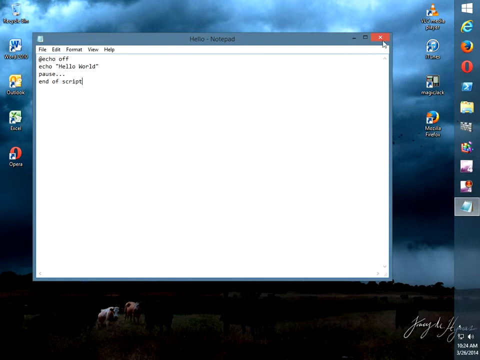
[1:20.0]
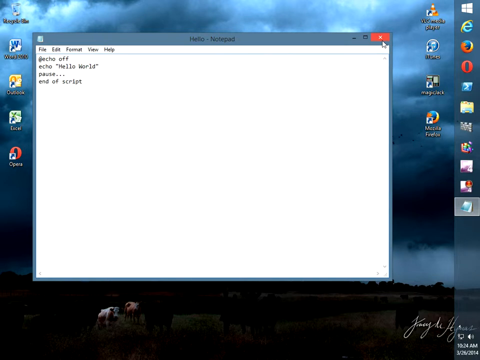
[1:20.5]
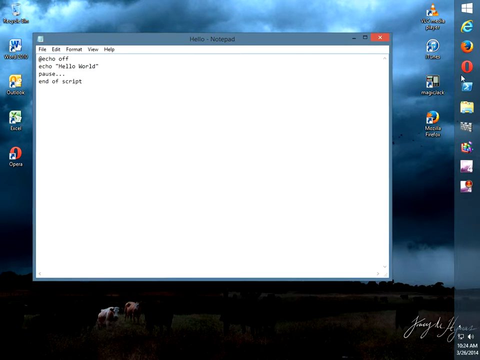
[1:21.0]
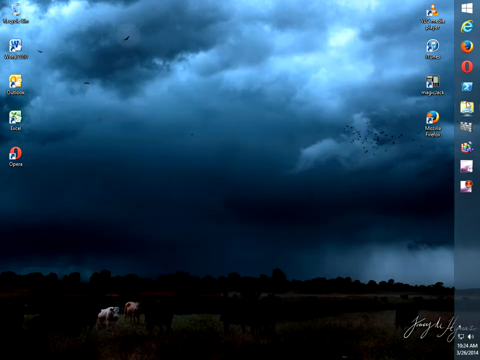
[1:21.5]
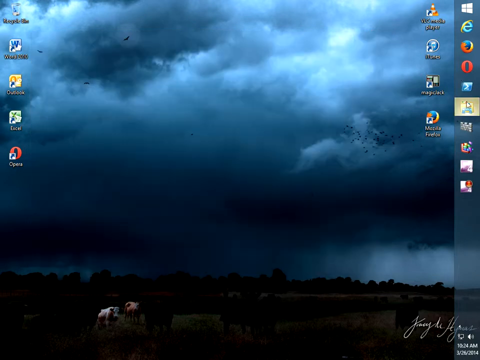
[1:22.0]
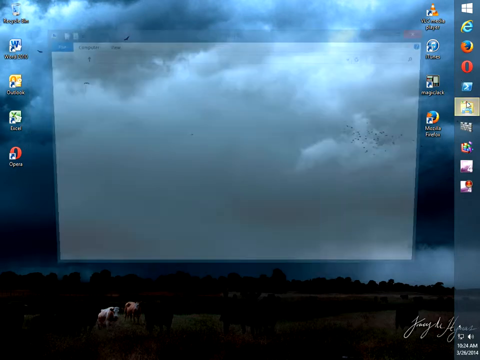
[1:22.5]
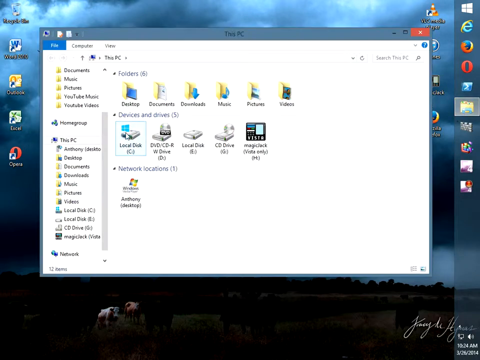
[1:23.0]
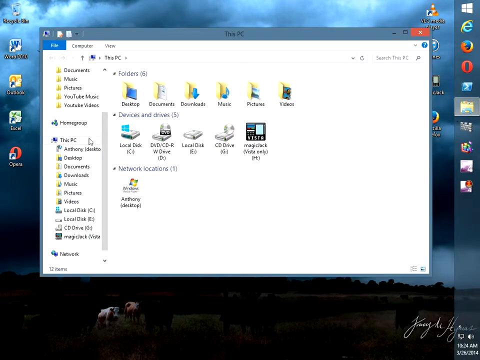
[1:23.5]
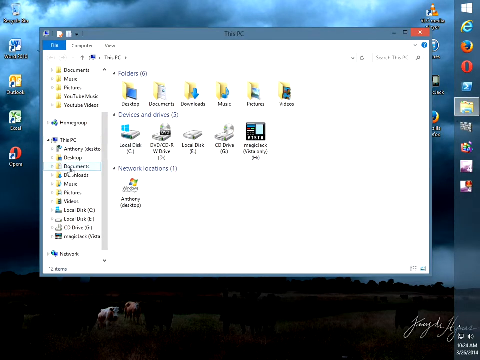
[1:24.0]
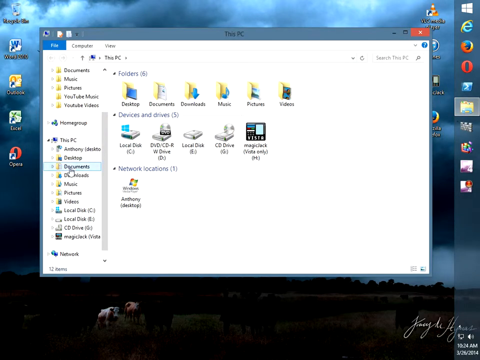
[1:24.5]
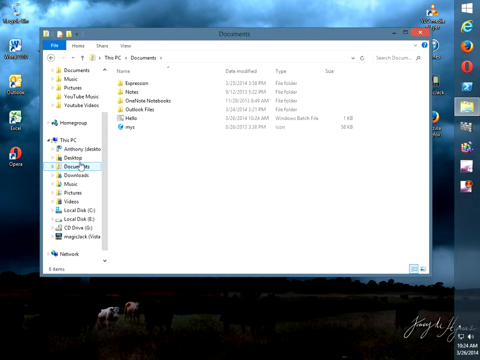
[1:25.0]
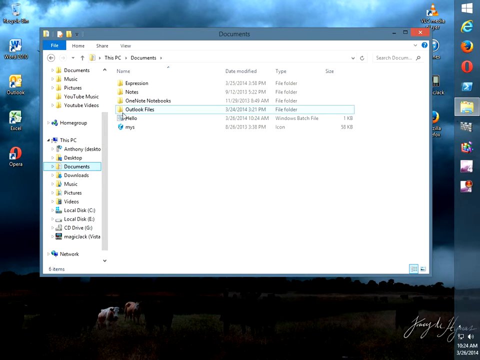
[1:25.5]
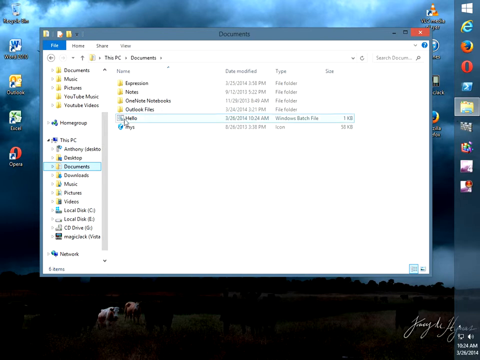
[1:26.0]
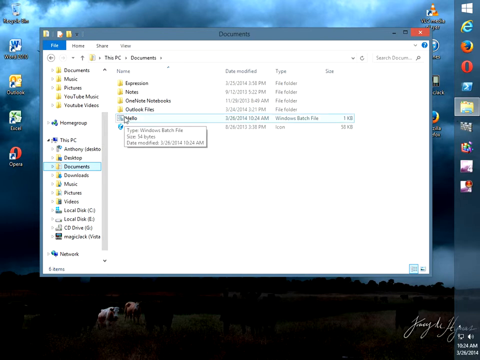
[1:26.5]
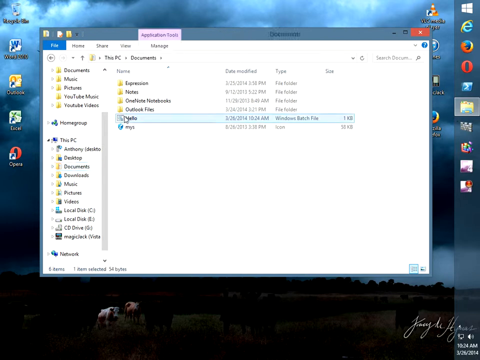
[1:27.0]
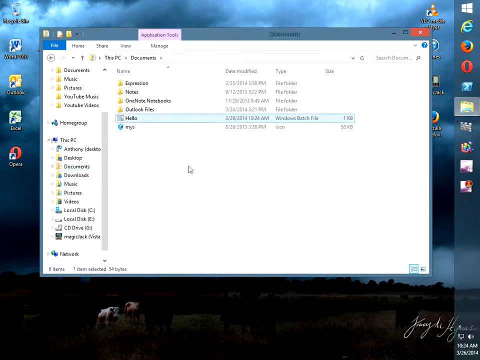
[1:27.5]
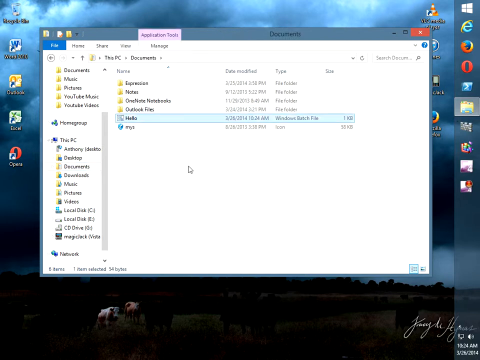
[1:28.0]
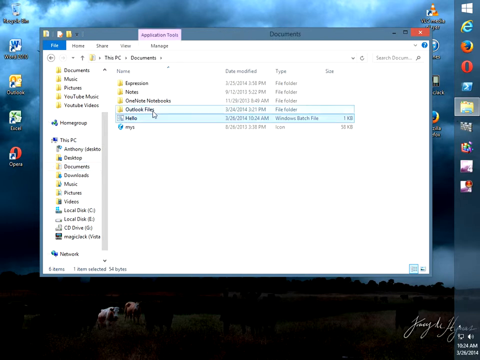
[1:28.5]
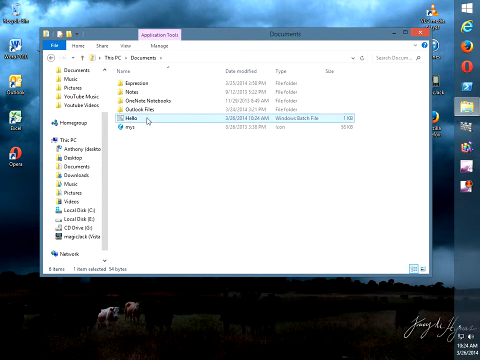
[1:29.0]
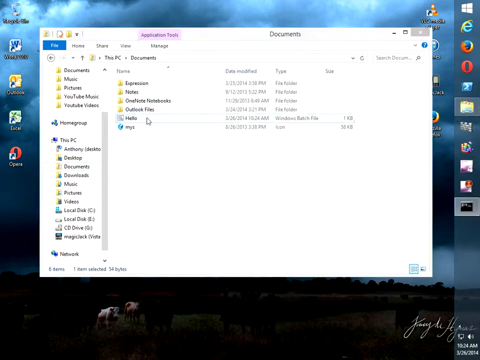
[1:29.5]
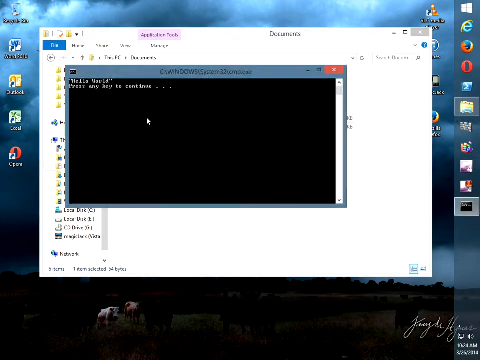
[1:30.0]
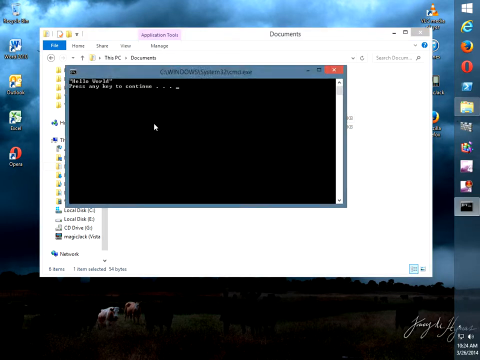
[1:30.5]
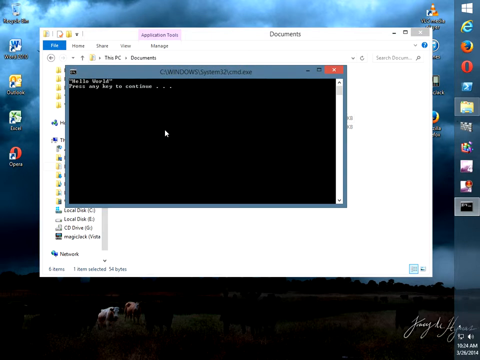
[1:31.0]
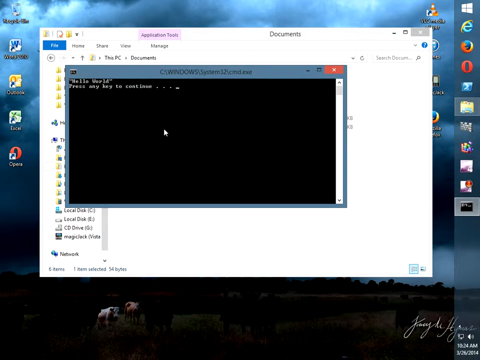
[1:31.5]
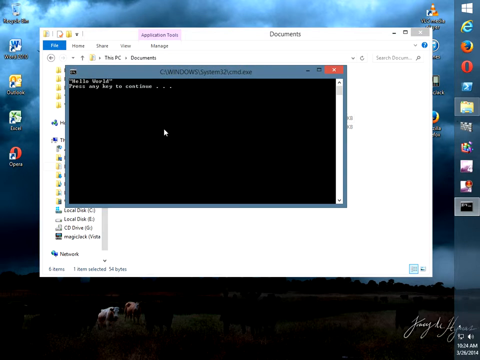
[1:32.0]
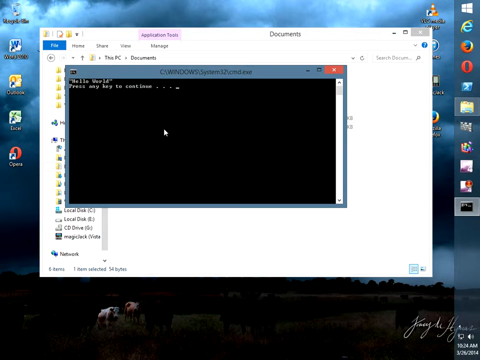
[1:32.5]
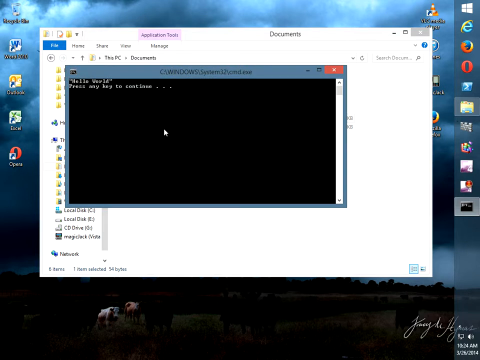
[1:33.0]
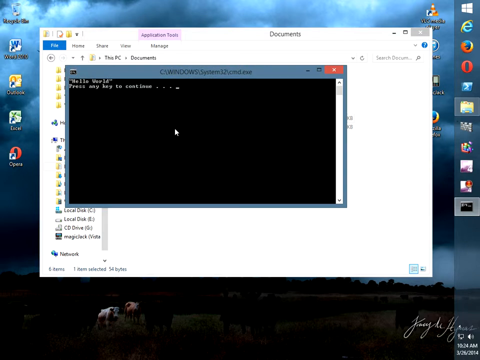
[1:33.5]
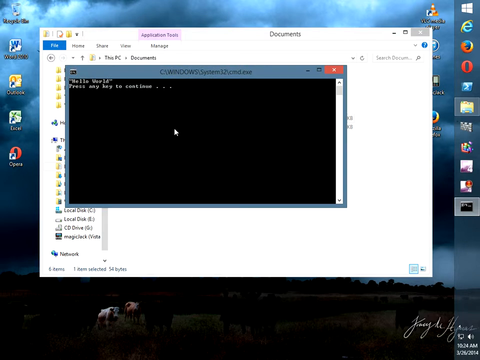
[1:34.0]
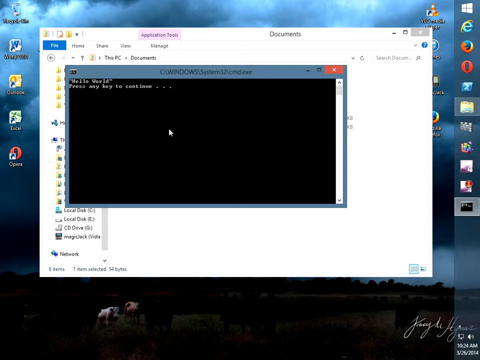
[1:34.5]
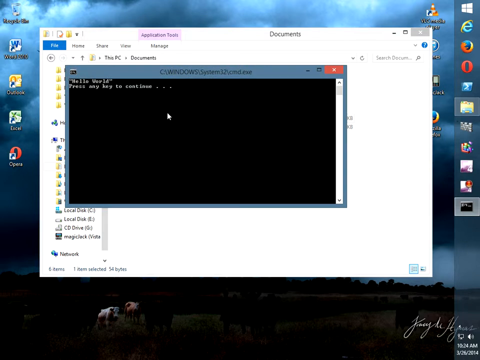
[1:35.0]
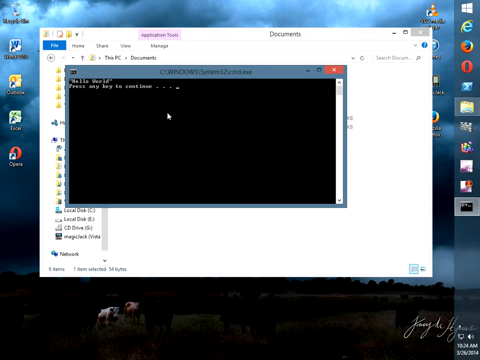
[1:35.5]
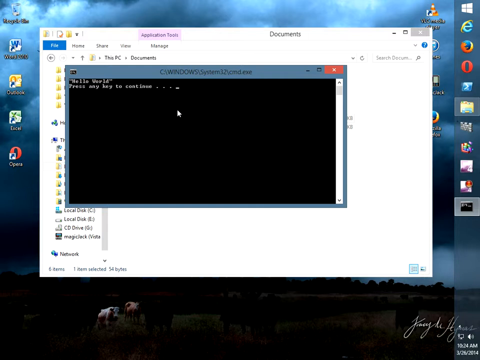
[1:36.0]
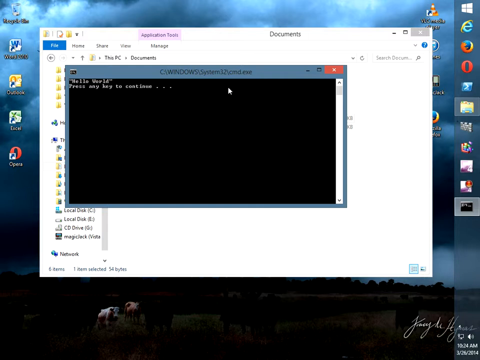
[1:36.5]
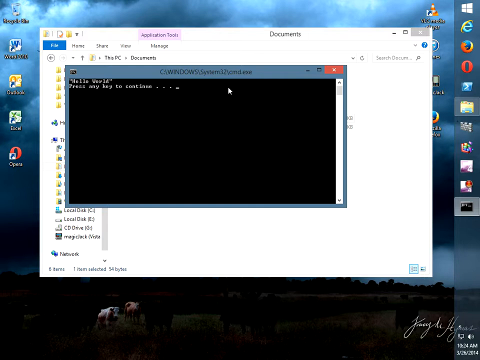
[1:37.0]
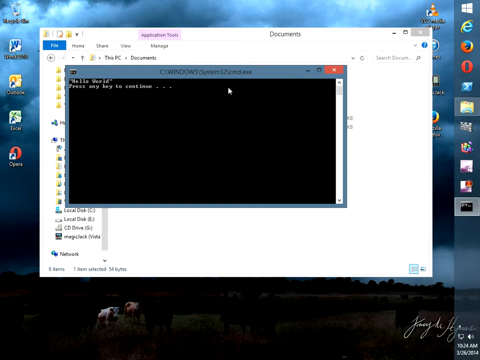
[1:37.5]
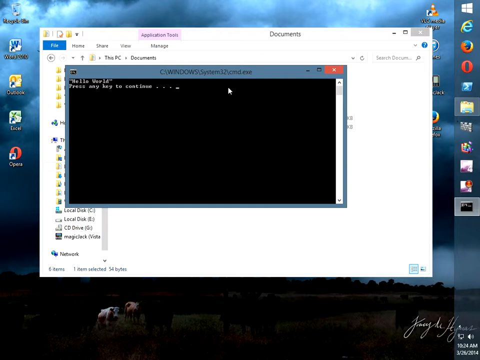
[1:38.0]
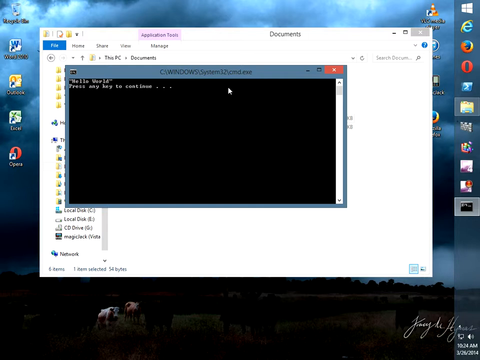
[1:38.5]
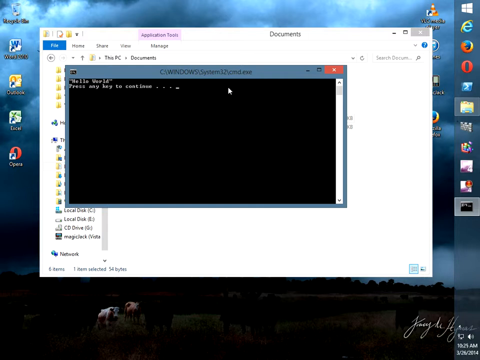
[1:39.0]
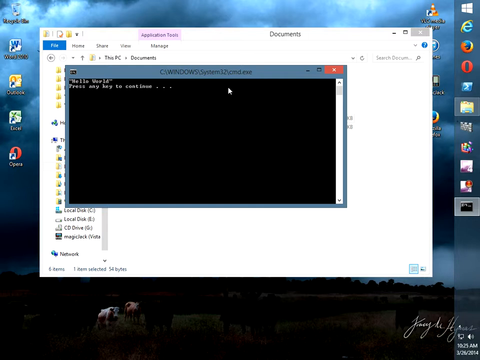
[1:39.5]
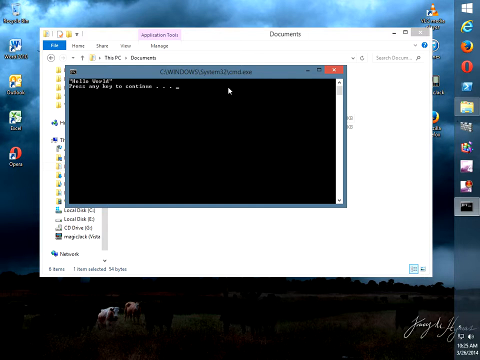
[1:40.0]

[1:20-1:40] The file, instead of being untitled, is now named "hello". It contains "@echo off", then echo with an open quote, "Hello World" with both words capitalized, and an end quote, then "pause" followed by three periods or dots, and on the next line "end of script". The view holds on this, then the file is closed and This PC is opened. The user goes to Documents, down to the hello text file, clicks on it, and opens it in Windows run, which shows "hello world press any key to continue" in white text.